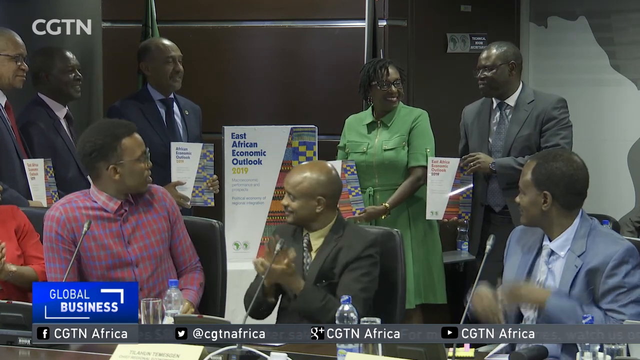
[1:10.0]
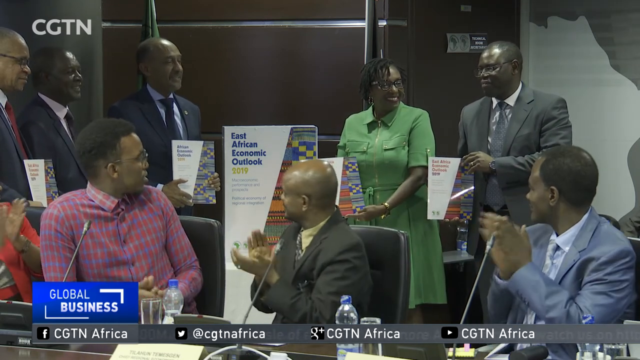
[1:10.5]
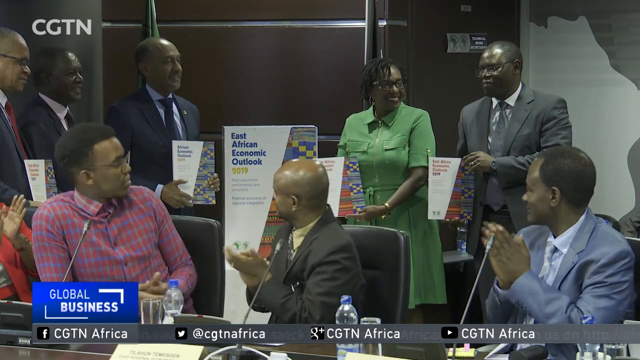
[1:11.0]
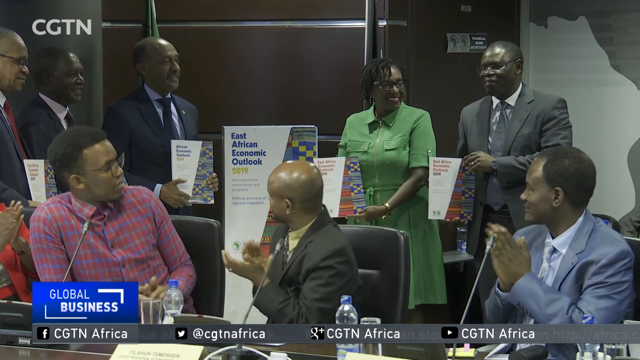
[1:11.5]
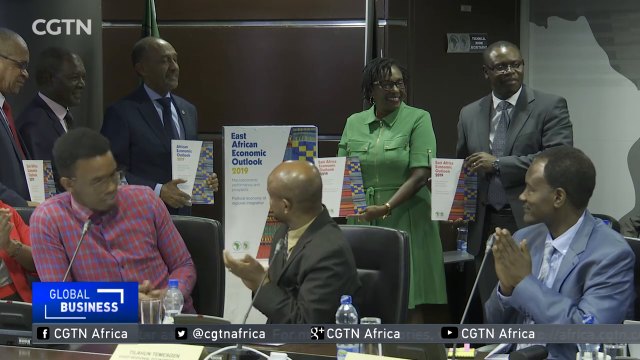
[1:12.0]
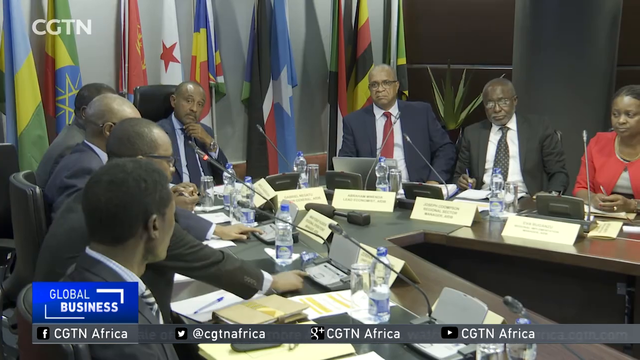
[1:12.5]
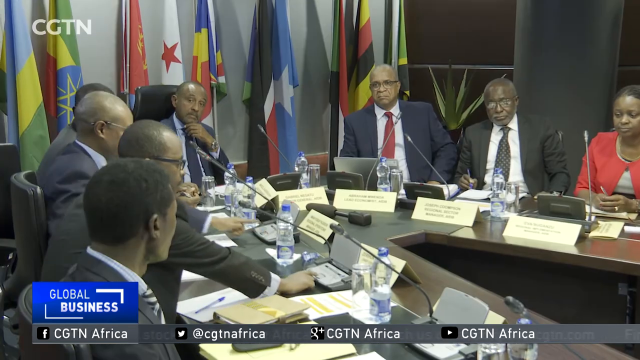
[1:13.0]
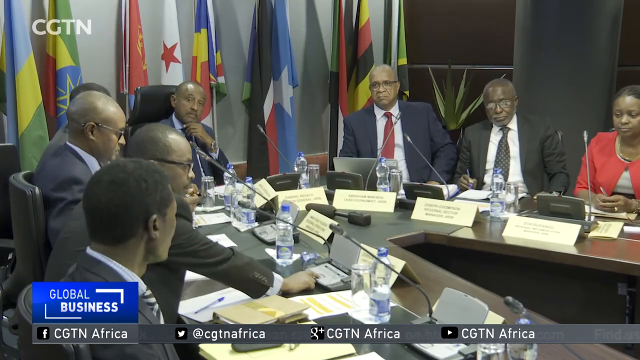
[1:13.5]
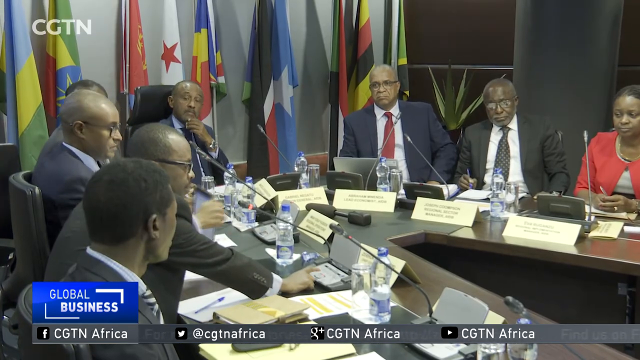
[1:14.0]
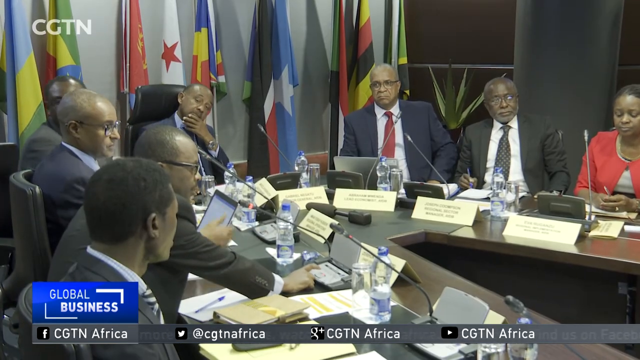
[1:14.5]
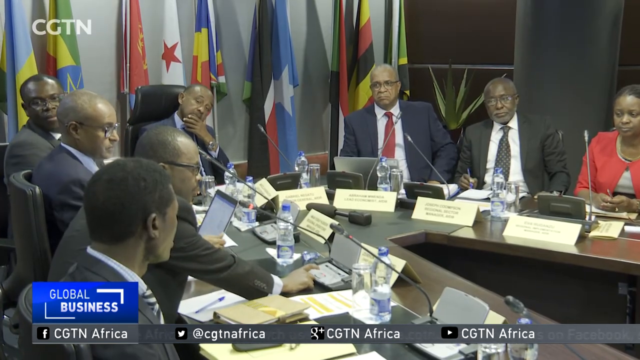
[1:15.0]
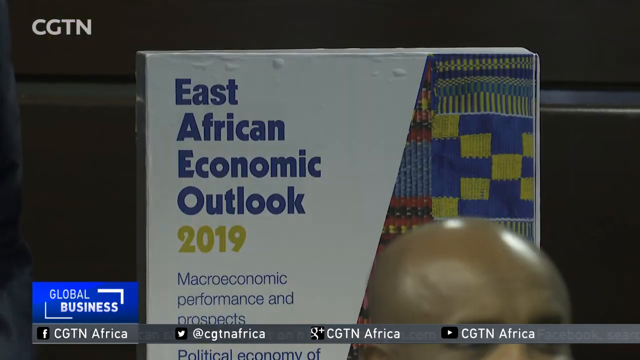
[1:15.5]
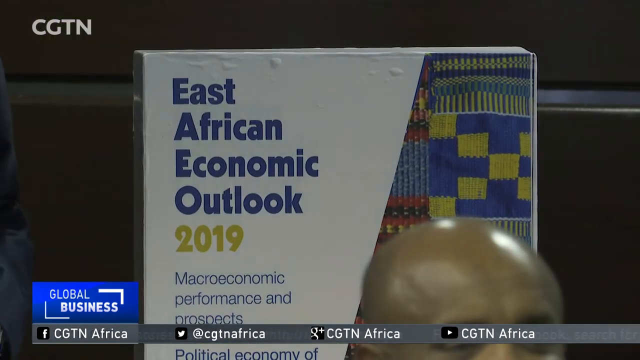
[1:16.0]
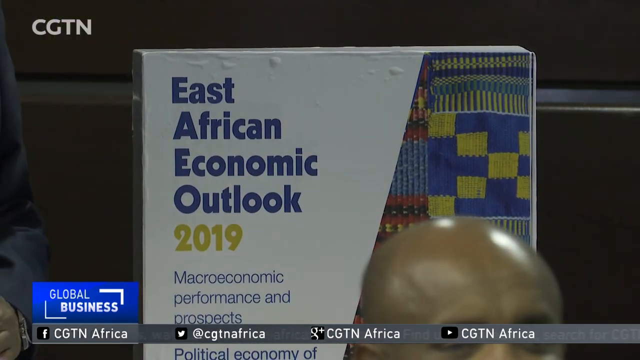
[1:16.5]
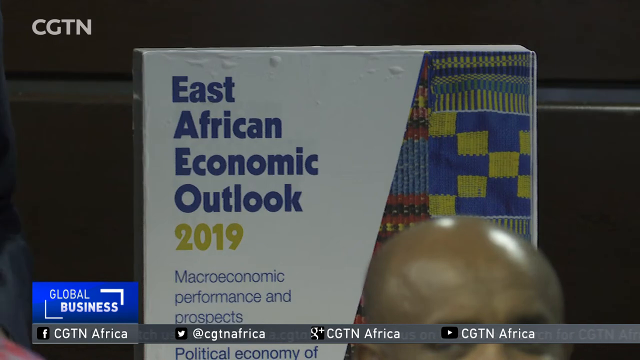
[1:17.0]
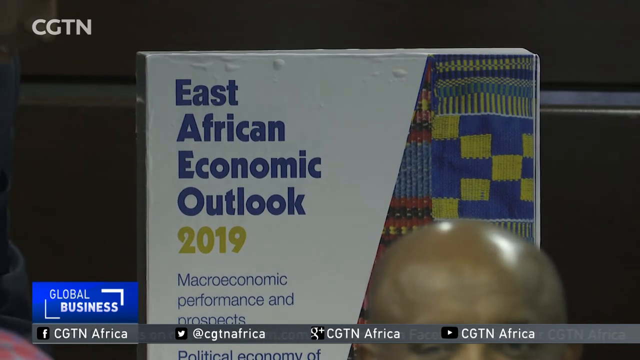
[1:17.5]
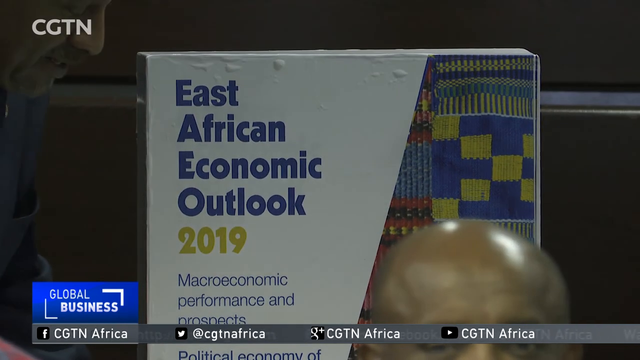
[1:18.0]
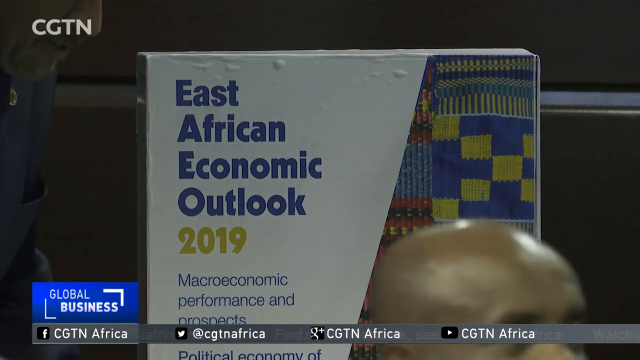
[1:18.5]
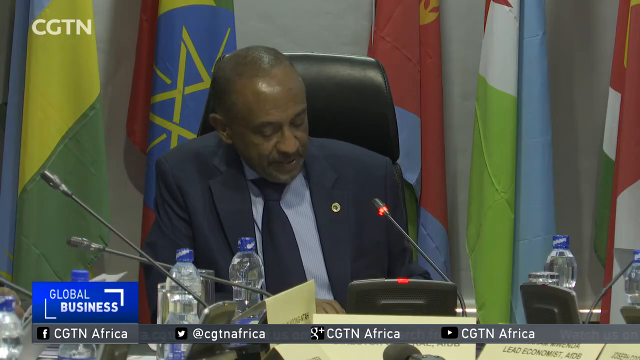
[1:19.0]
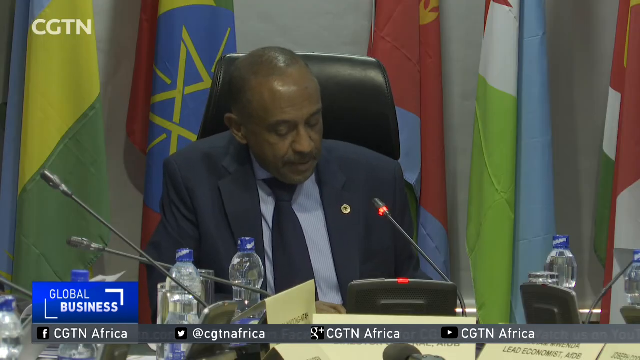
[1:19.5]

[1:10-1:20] Nine people are in view, and the three seated at the front turn around, look at those standing behind them and begin to applaud. The scene changes to a different angle showing a desk with a cut-out in the middle that looks n-shaped. A chairperson is at the end of the desk, four people are on the left wing and three on the right wing. The three on the right wing are further away as the camera looks toward them: two men and a woman in a red cardigan. Suited men are on the left. Each person has a yellow card, presumably showing their name or title, and they seem to be settling in. A brochure titled "East African Economic Outlook 2019" is then shown, with the top of someone's head, a black background, an oblique line running from top to bottom on the side of the book, a blue and yellow flag and some patterns. At the very last second, hard to see, the view turns to a speaker sitting at a desk with a microphone, who is speaking into it or seems to be.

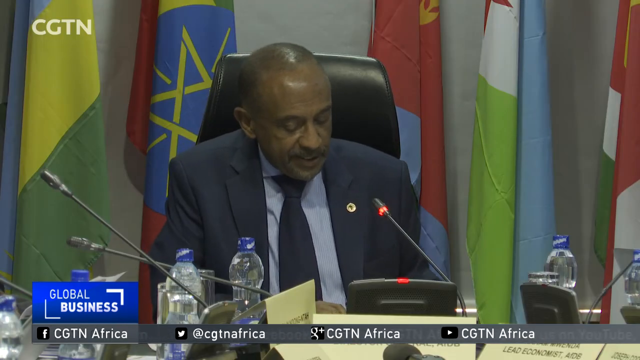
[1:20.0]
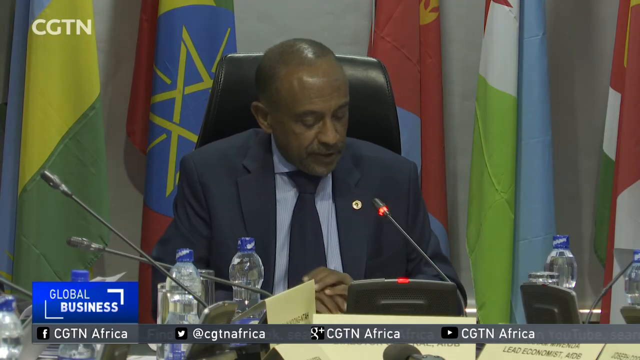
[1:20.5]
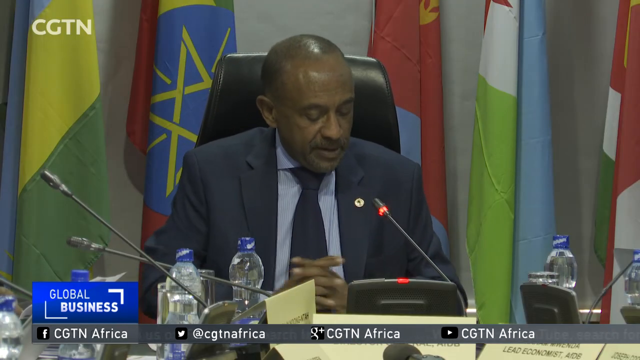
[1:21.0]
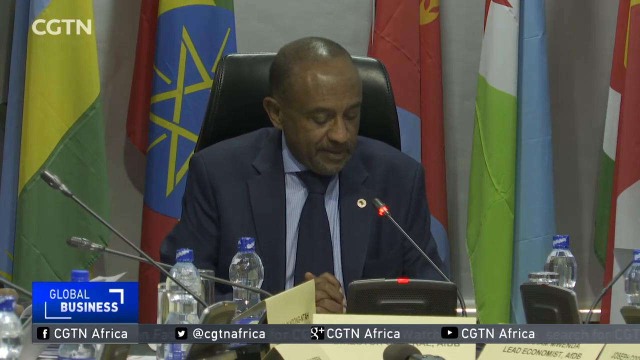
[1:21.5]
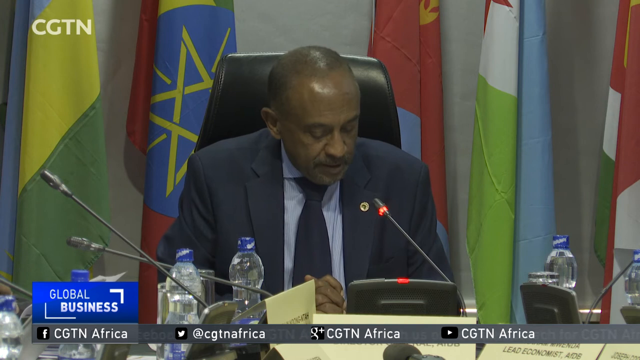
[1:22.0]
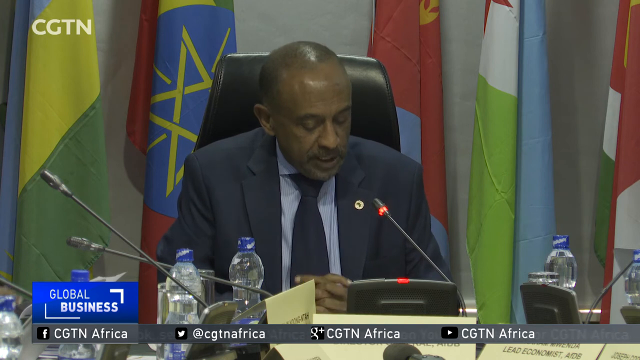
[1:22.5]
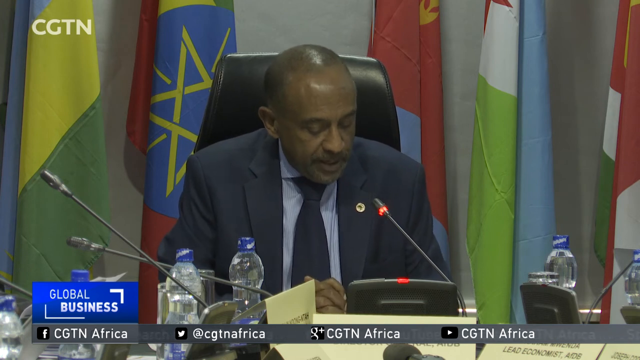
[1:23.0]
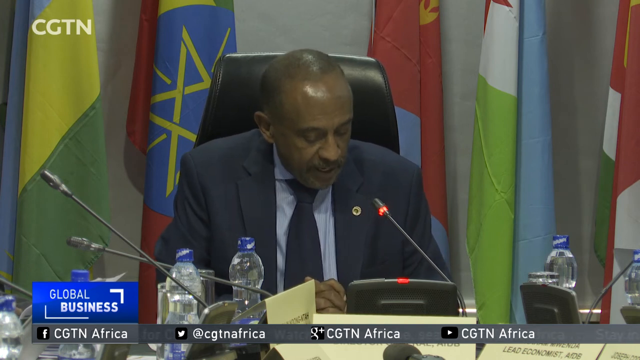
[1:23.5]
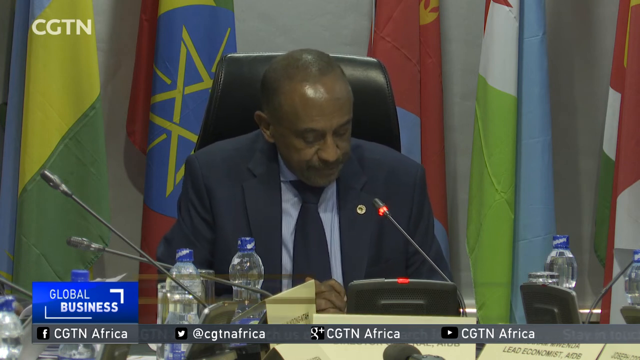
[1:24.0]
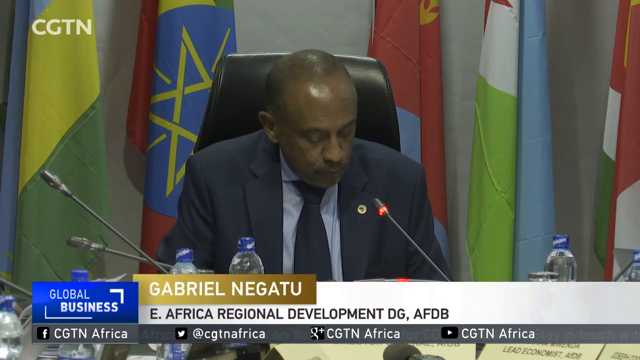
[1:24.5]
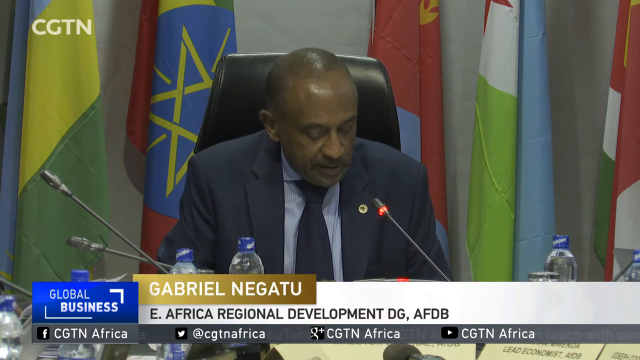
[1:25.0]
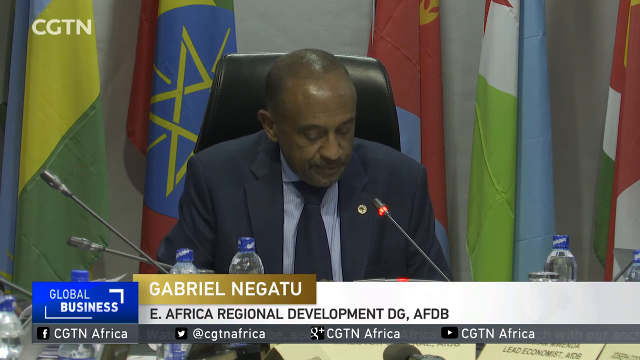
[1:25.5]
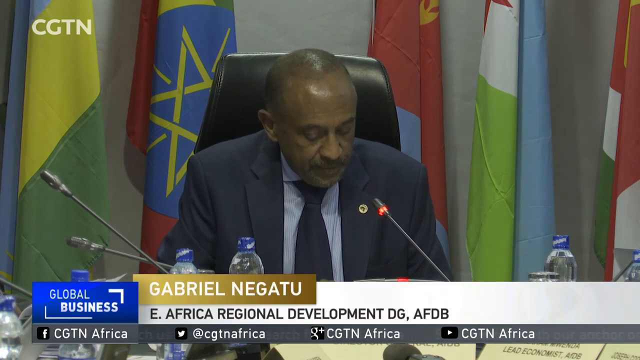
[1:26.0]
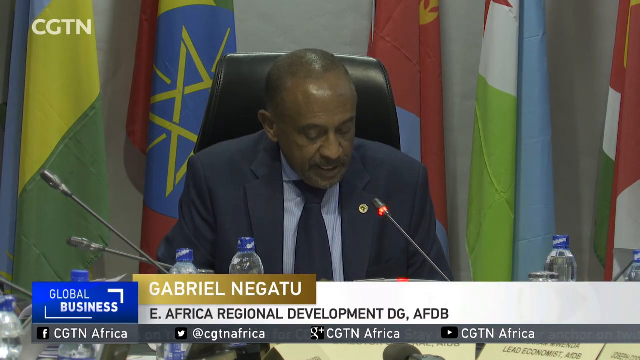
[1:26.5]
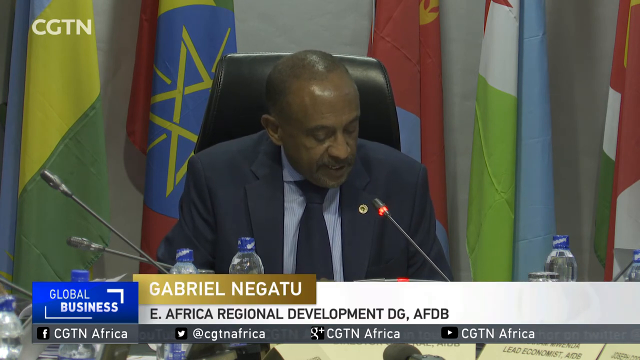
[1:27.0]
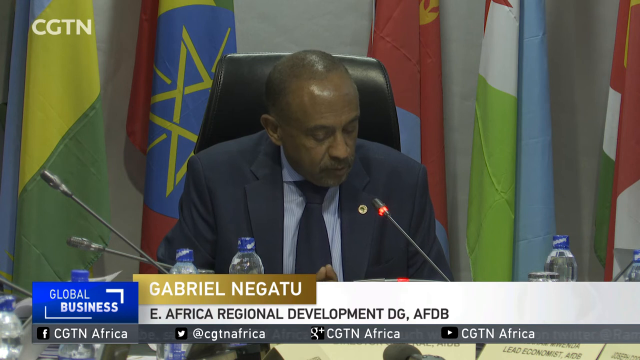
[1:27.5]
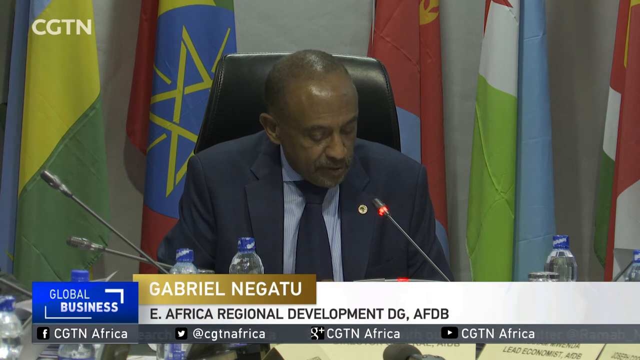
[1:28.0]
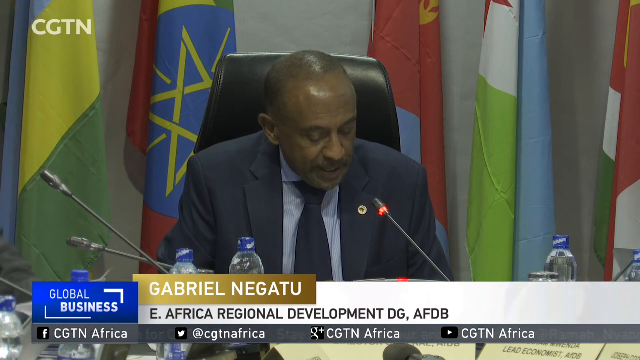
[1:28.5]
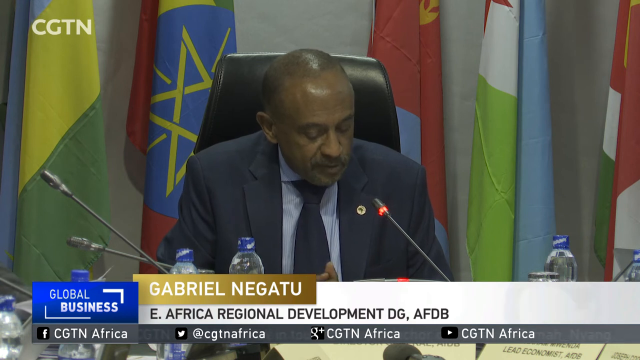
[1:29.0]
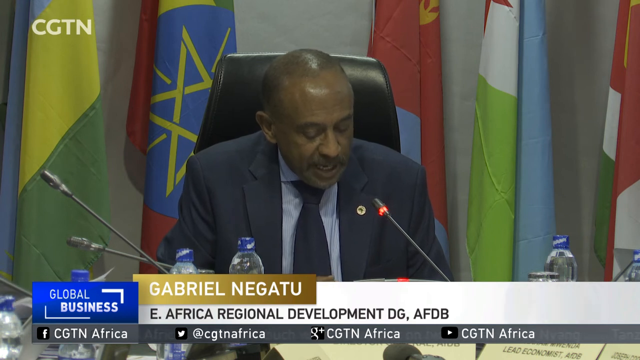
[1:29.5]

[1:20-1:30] The speaker sits in a high-backed black chair with the flags of the East African nations behind him. He wears a light blue shirt with a darker blue suit and tie and looks down at notes he is reading from, which seem to be on a type of tablet. Three bottles of water and many microphones are around him. As he speaks, he clasps his hands in front of him with the fingers interlocked. He is identified as Gabriel Negatu, the East African Regional Development DG for the AFDB.